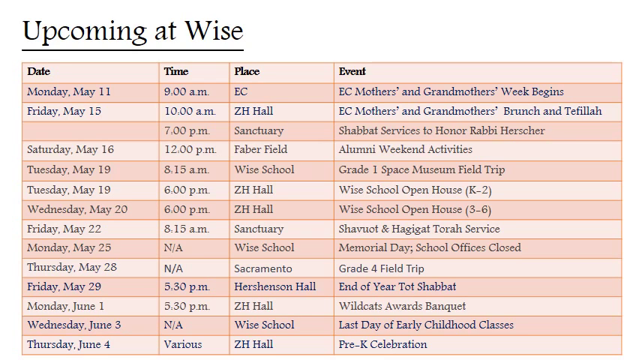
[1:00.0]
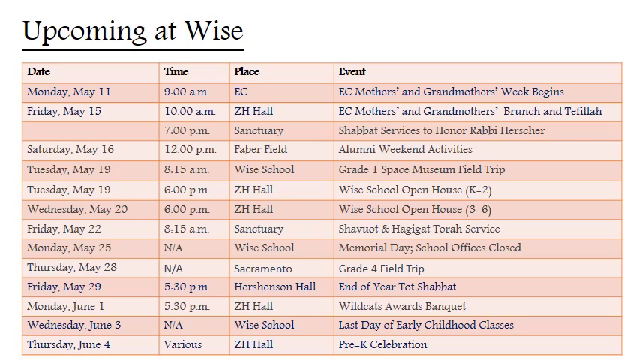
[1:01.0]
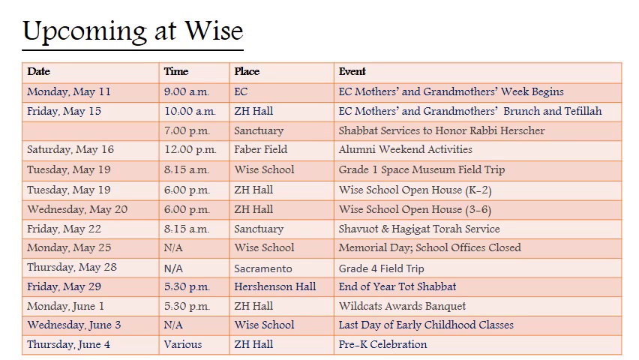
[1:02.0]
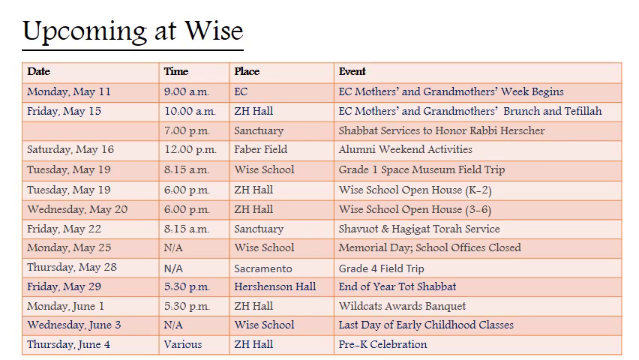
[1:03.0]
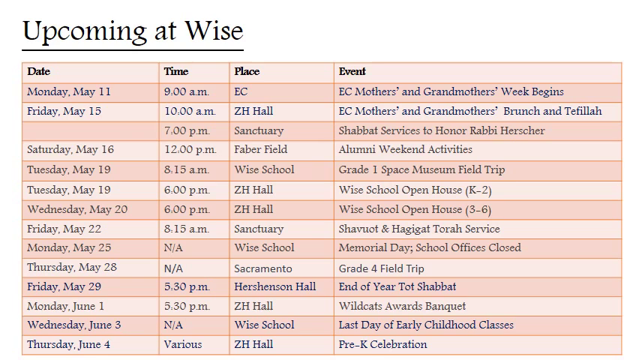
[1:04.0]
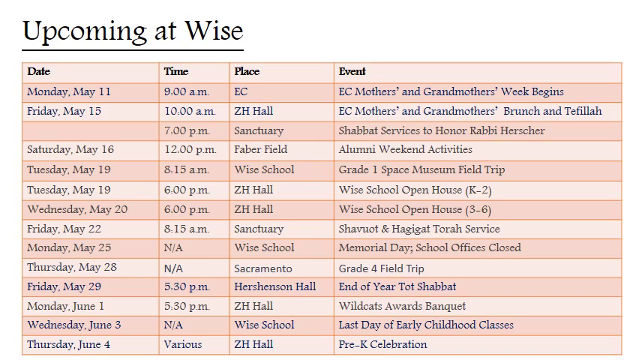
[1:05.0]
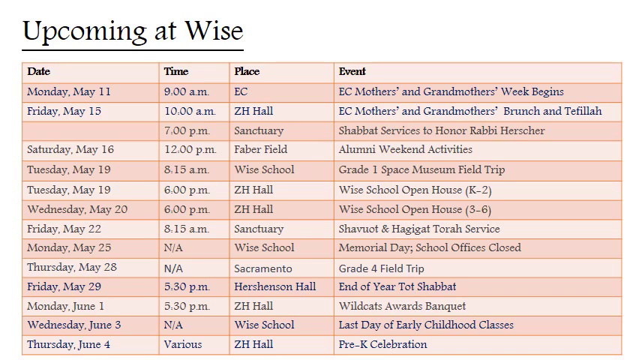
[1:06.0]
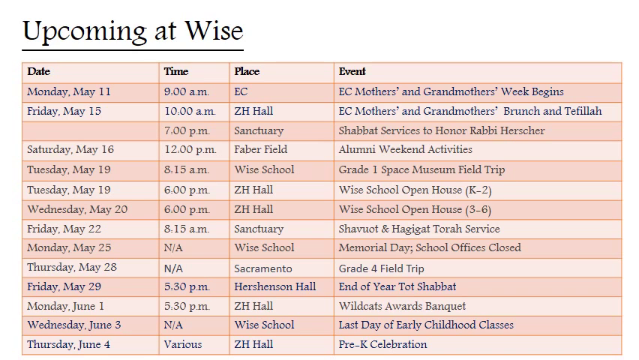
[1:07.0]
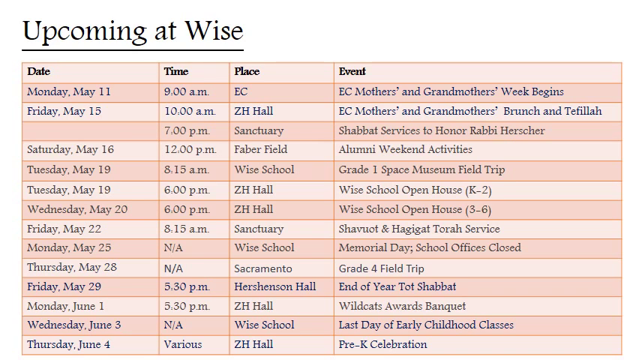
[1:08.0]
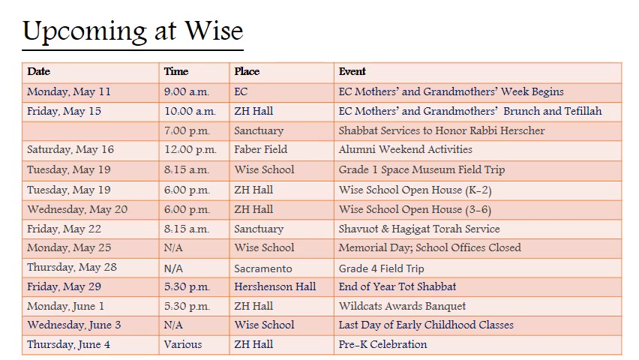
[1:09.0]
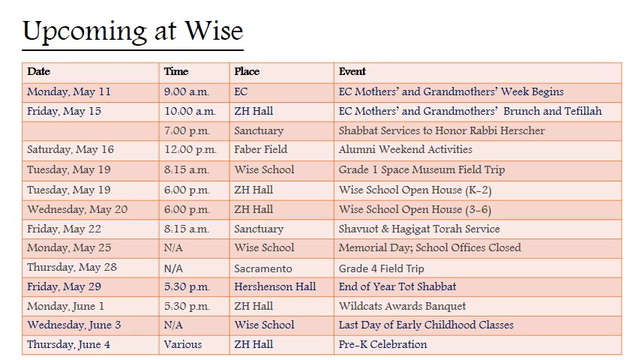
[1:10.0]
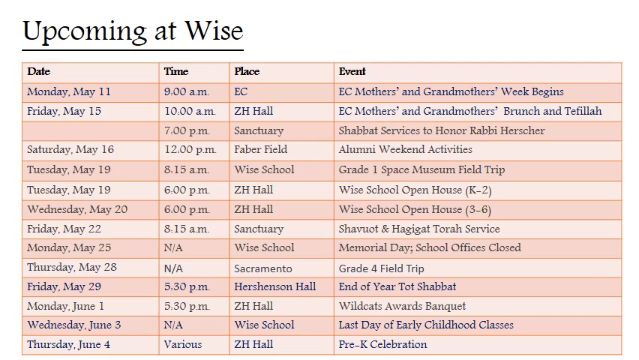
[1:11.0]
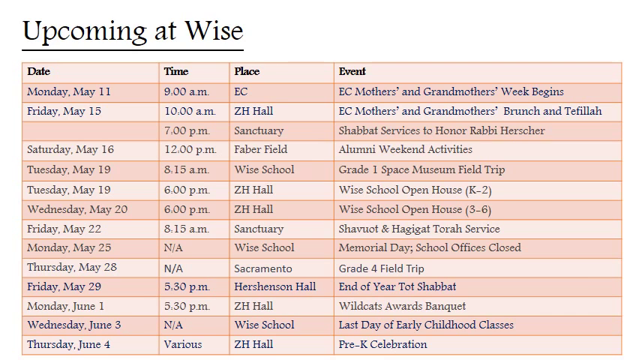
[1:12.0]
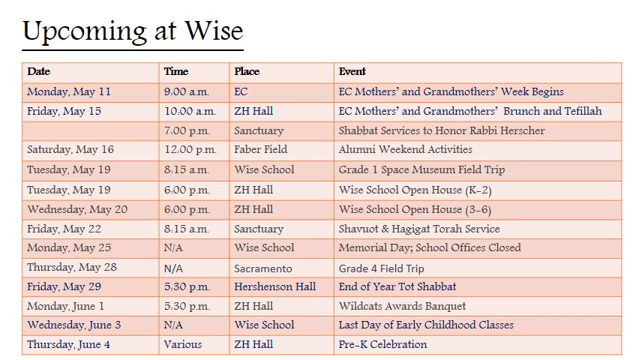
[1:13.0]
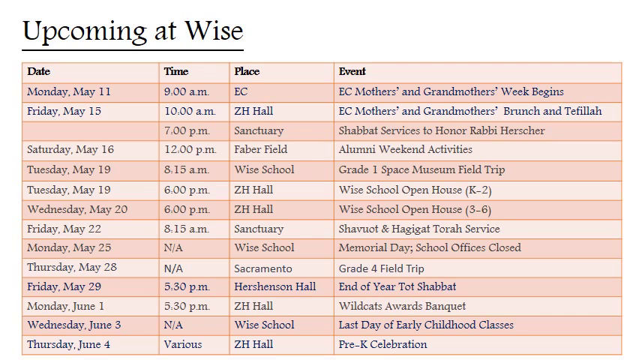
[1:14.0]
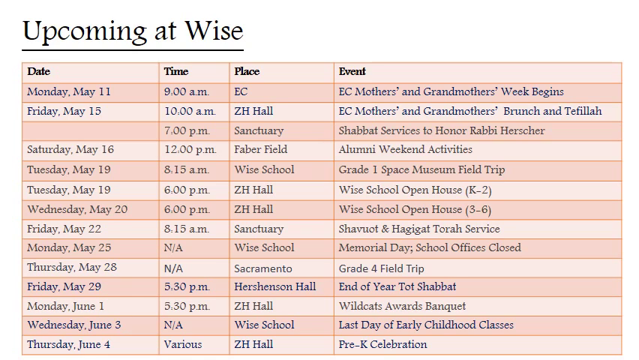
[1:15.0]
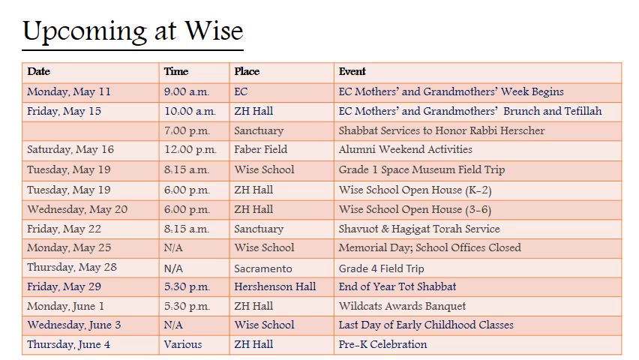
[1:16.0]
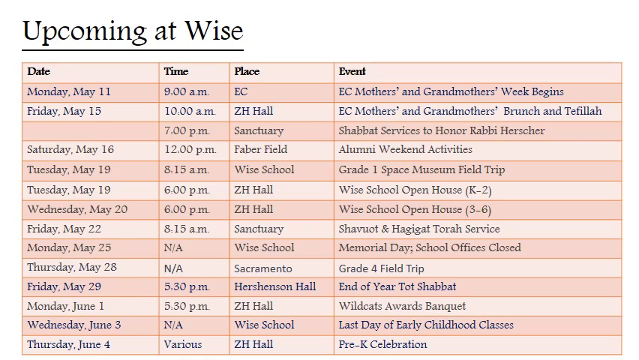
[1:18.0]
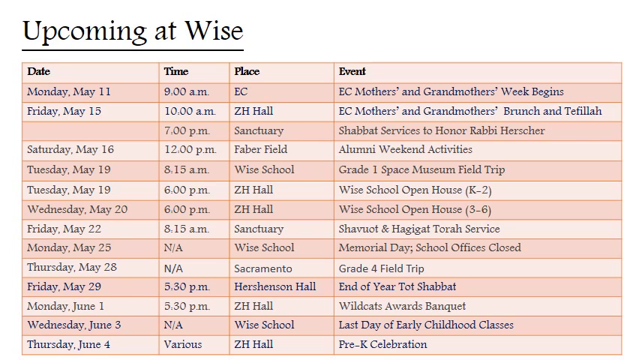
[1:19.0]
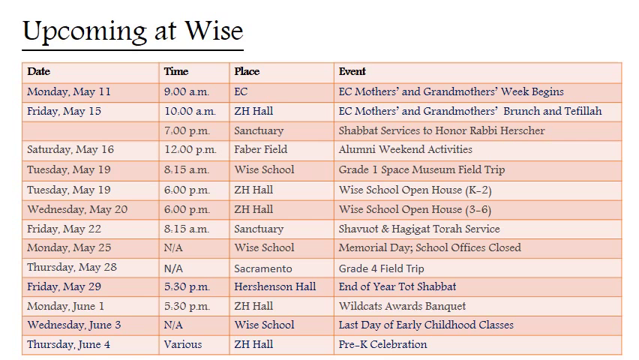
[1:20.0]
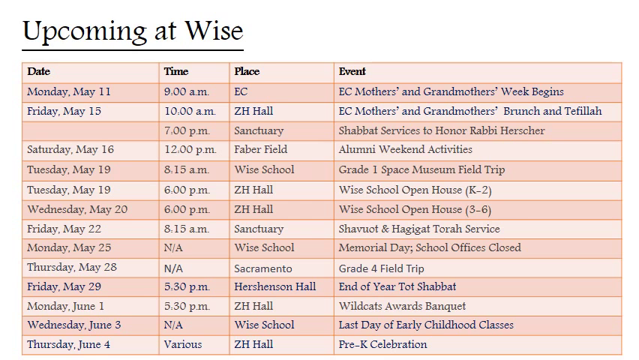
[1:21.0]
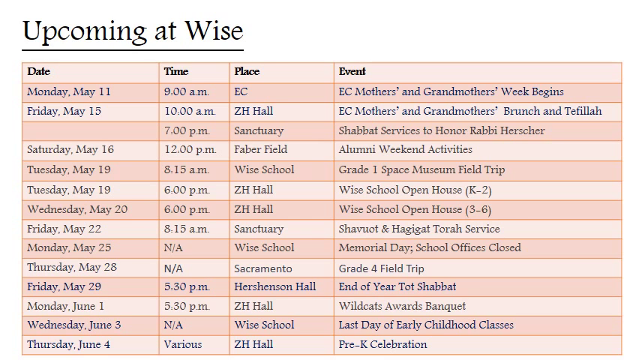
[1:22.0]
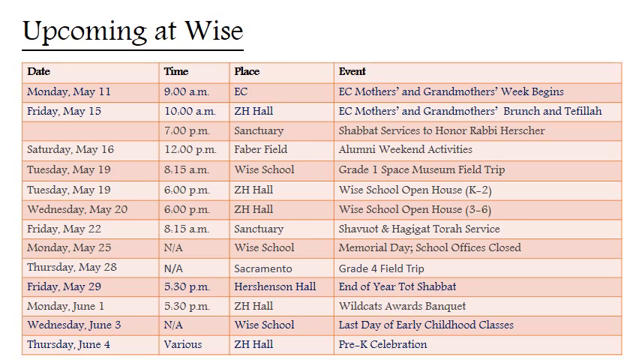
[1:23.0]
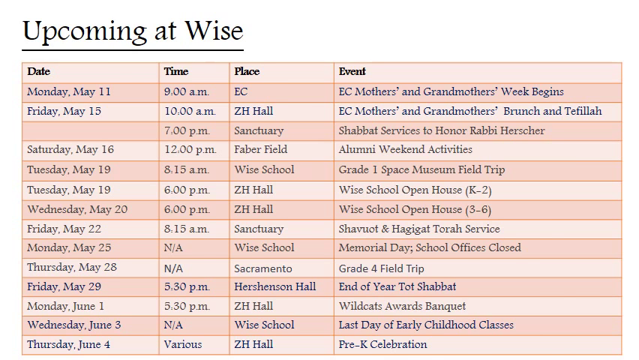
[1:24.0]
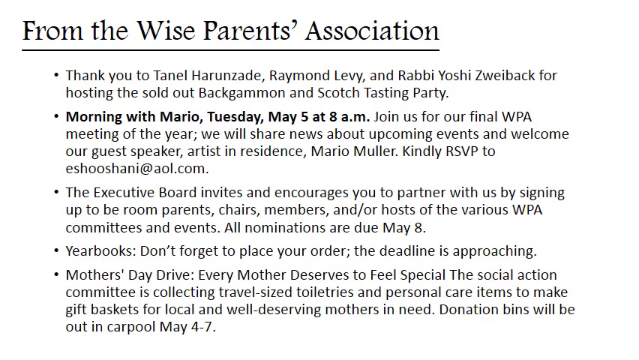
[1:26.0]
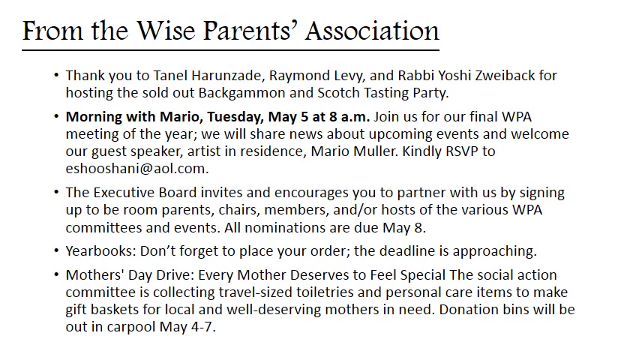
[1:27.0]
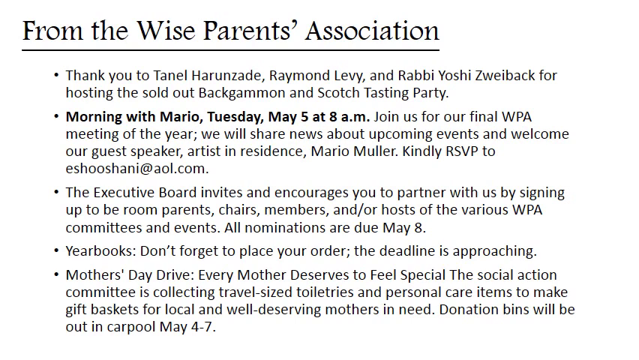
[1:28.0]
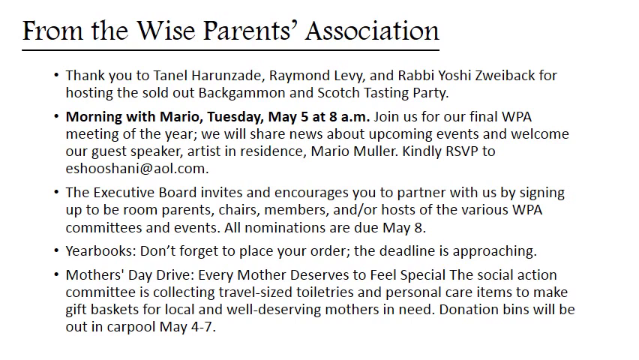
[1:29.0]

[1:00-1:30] A static image with a white background has an underlined black title at the top reading "Upcoming at Wise." Below is a chart with four columns, generally an almost peachy, peachy-pink color, with rows alternating light and dark. The four column headers, bolded in black, are "Date," "Time," "Place," and "Event." The dates begin with Monday, May 11th and run down to Monday, June 1st. The video then switches to another static document in black text on a white background. At the top, in bigger underlined black font, it reads "From the Wise Parents Association," and below that are five bullet points.